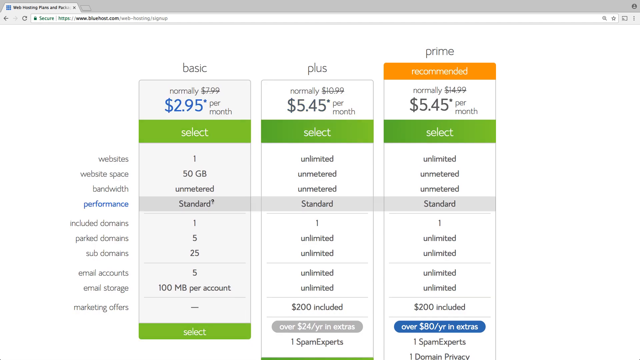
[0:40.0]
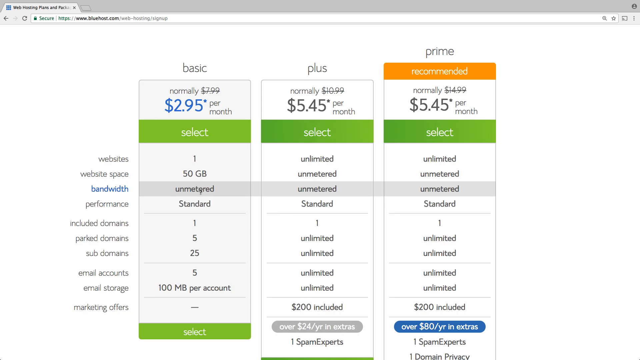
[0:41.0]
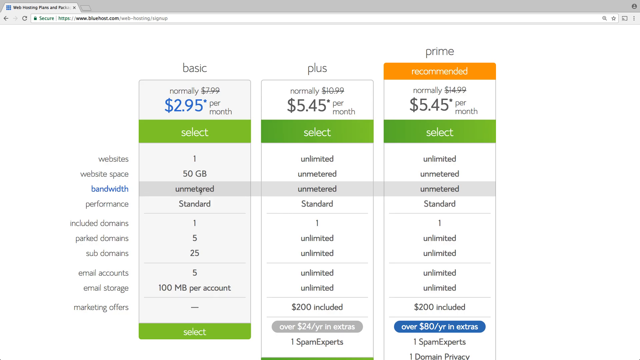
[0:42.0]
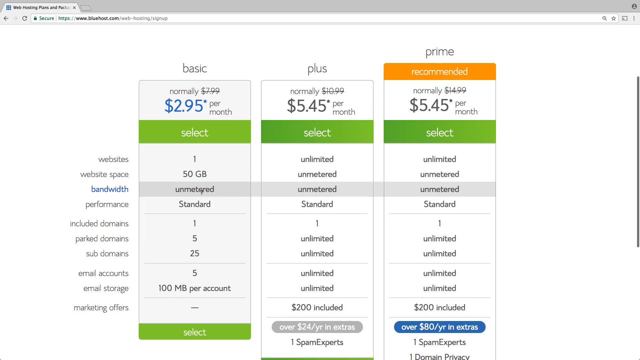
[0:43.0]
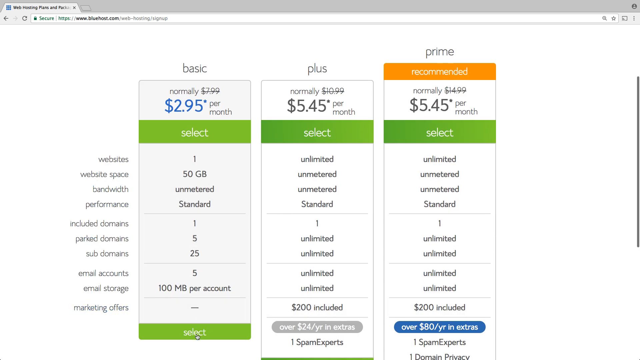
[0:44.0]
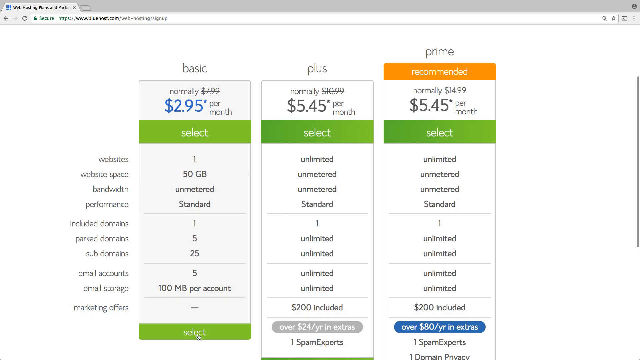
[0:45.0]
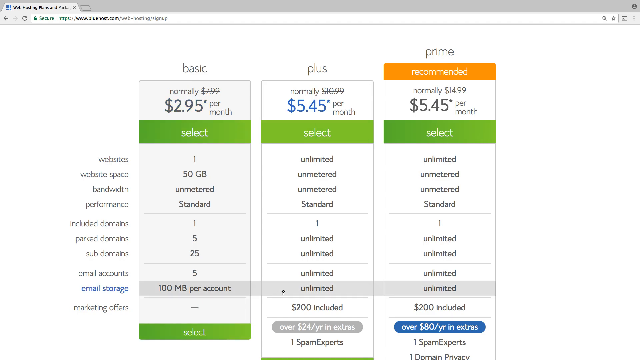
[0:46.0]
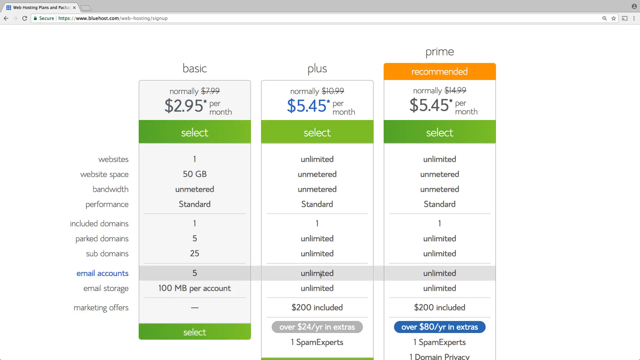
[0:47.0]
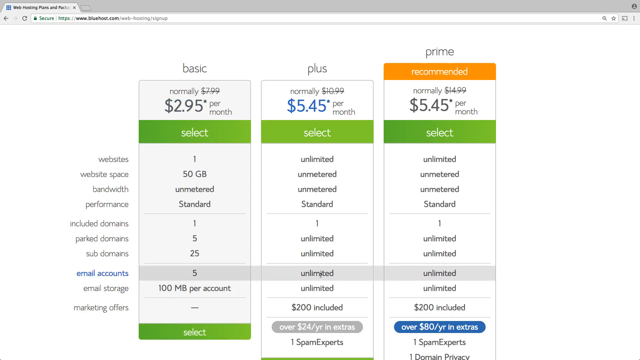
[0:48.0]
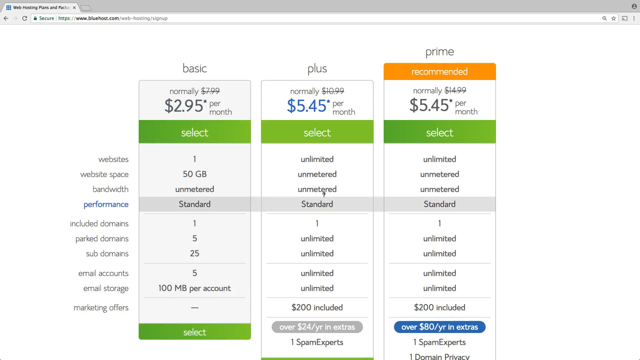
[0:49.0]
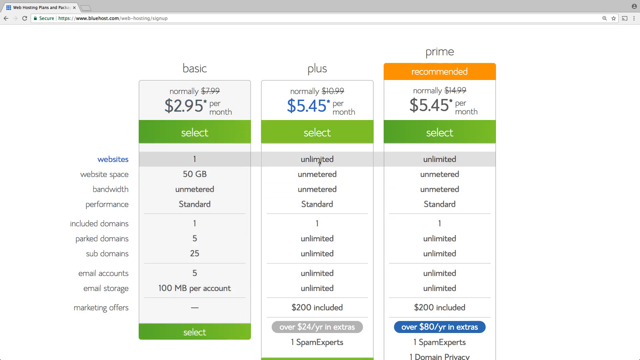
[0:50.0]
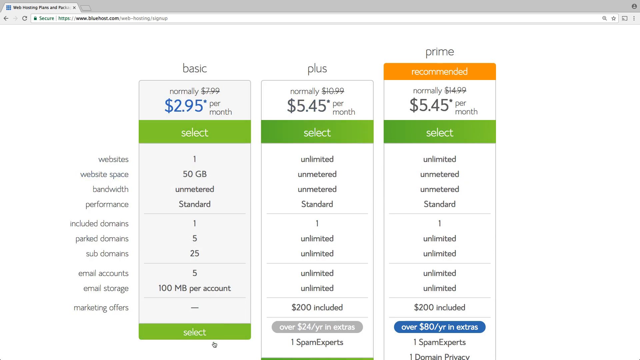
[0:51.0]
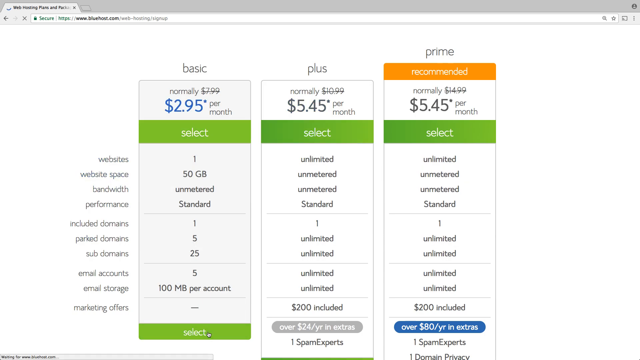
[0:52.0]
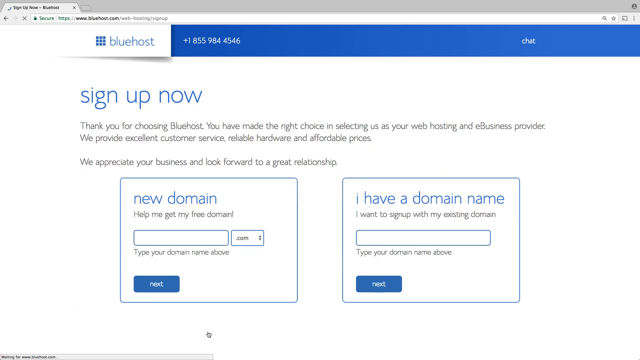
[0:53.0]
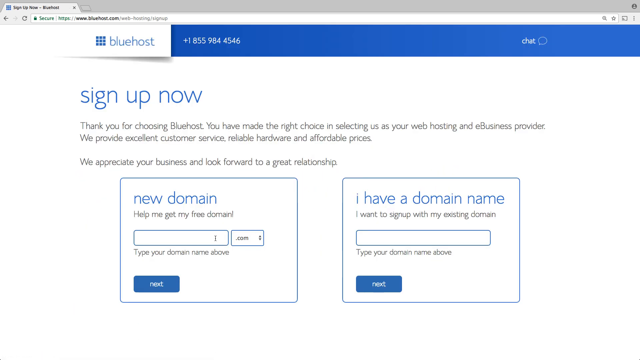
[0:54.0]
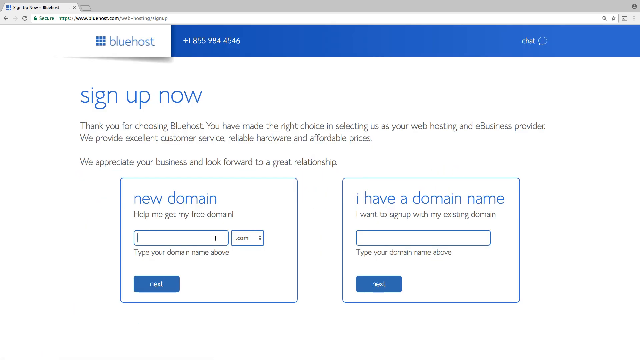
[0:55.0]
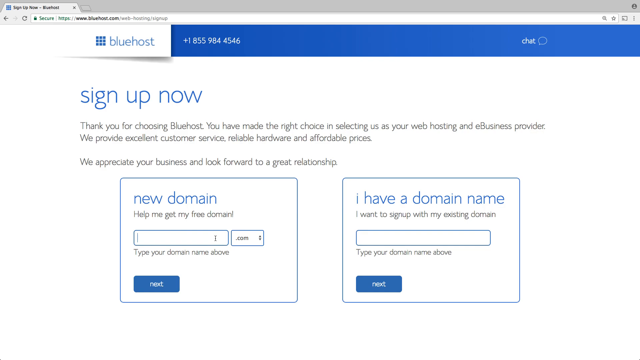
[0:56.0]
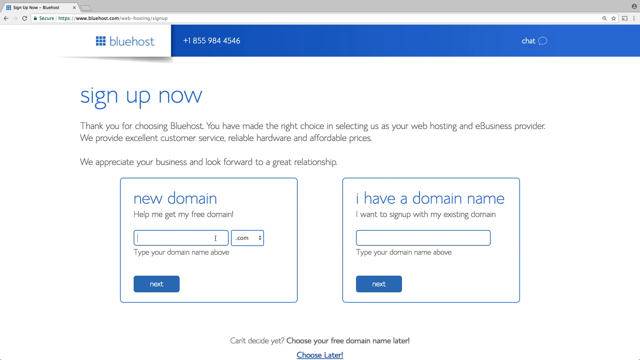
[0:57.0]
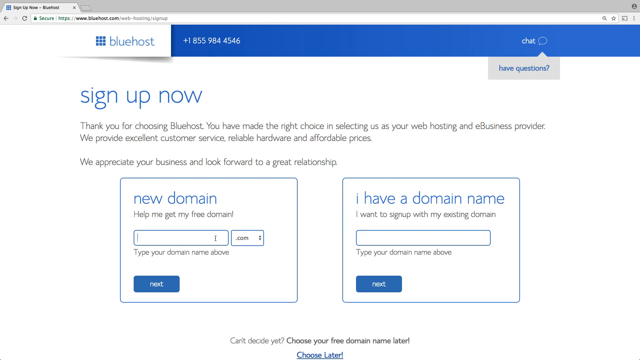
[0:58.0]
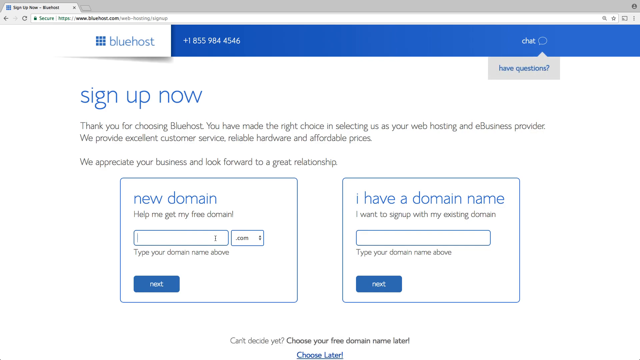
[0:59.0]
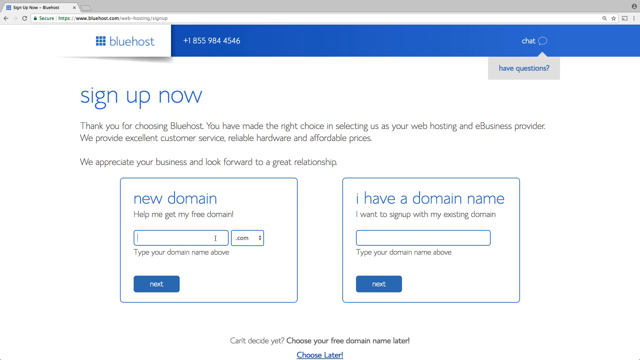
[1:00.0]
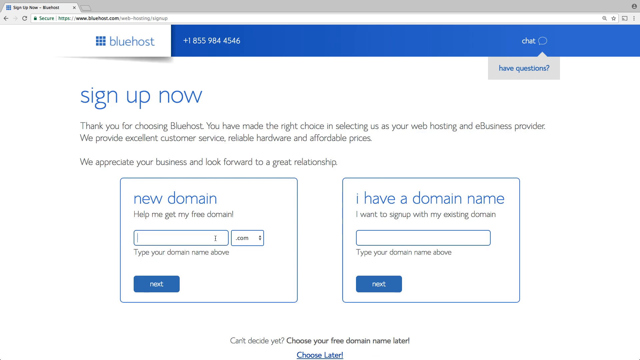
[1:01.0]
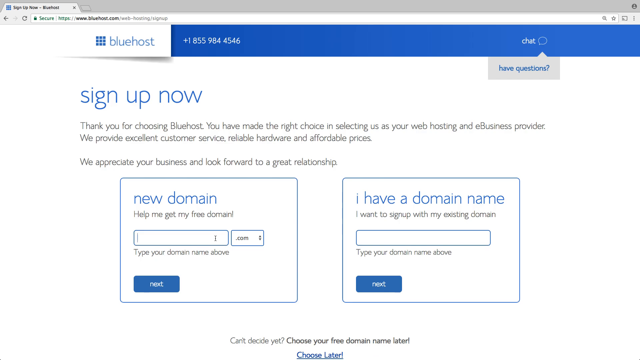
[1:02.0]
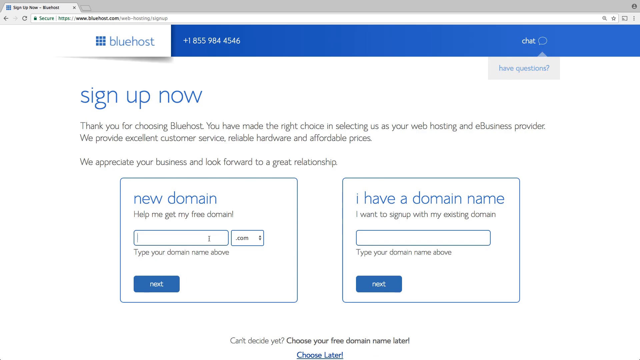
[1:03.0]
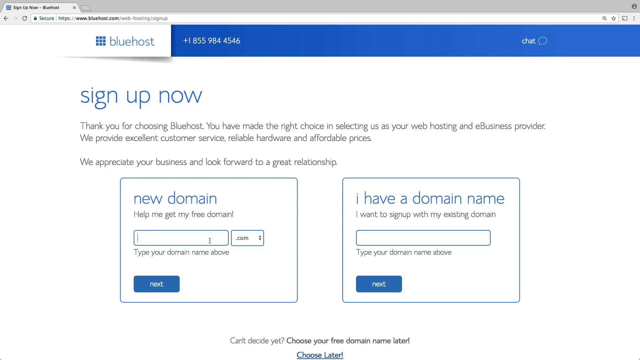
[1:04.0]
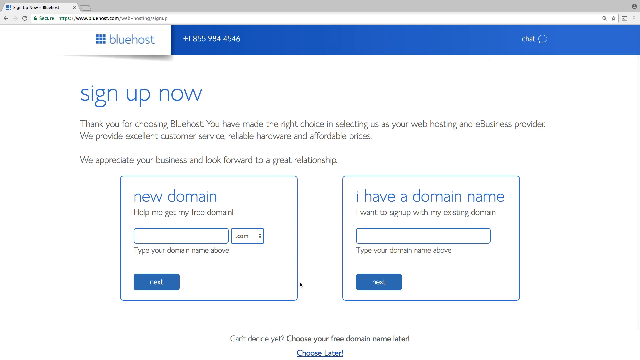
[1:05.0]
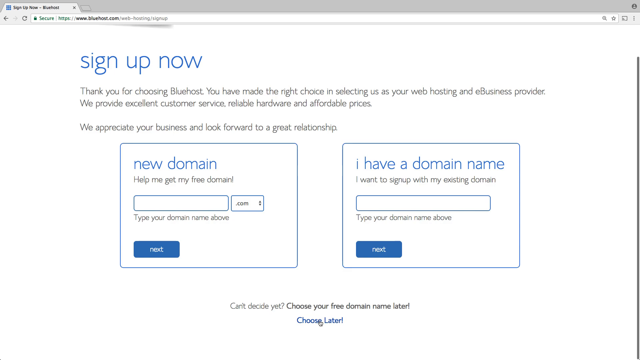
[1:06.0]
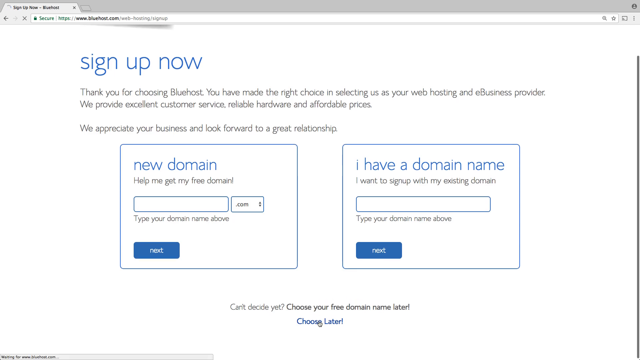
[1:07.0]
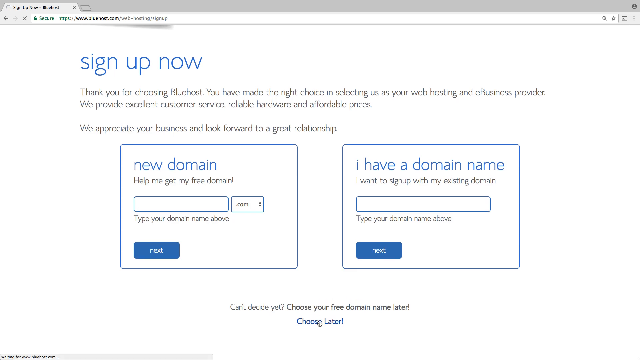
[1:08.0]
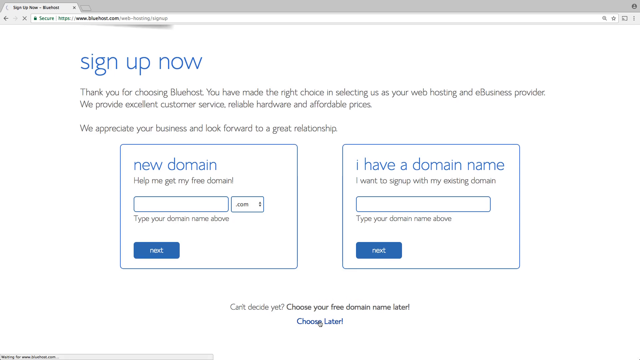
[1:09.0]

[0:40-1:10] A list of monthly plans appears, ranging from $2.95 per month up to $5.45 per month for both the PLUS and PRIME plans. The page has a white background, green select buttons, and mostly black text. Next comes a sign-up page where the user can create a domain or use a domain already in use, with a white background, sort of a blue border at the top, and a phone number that looks British. The website is Bluehost.